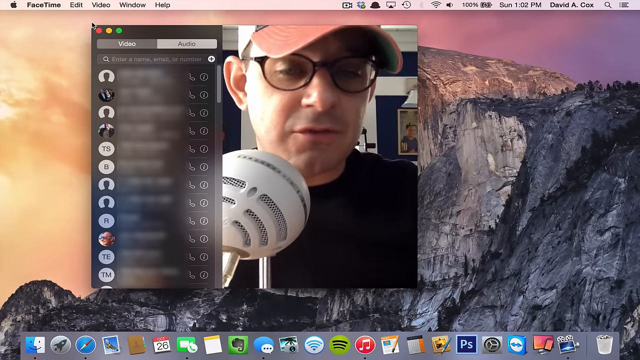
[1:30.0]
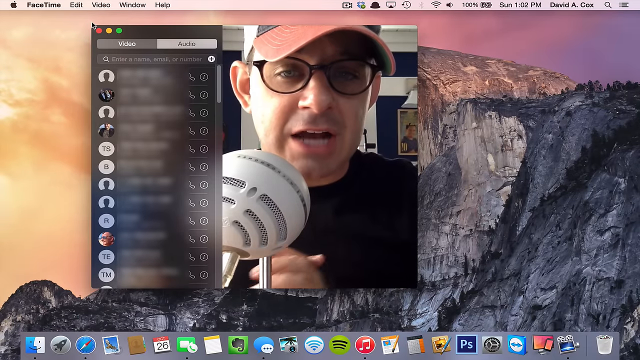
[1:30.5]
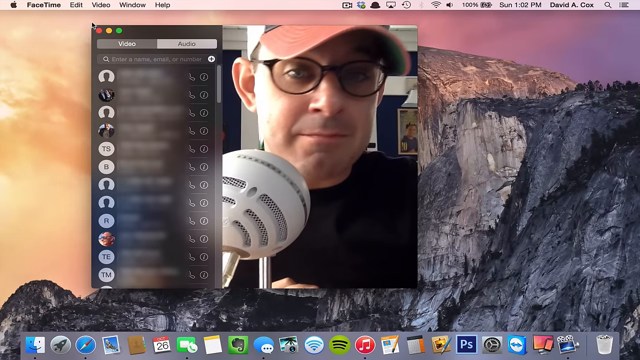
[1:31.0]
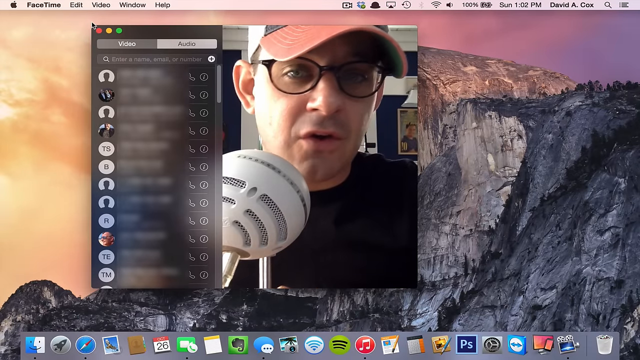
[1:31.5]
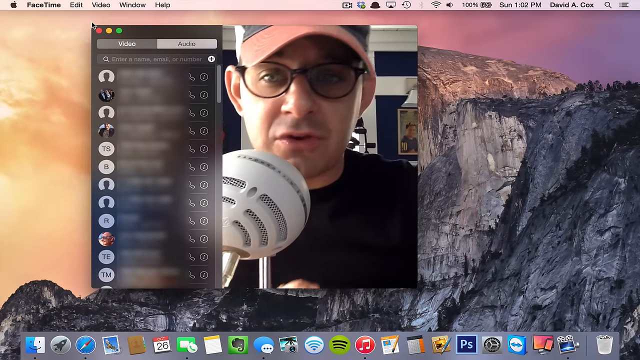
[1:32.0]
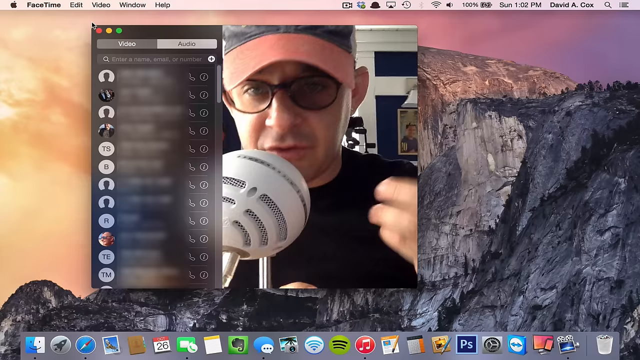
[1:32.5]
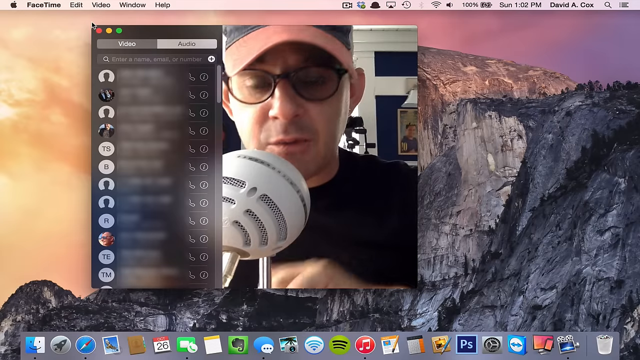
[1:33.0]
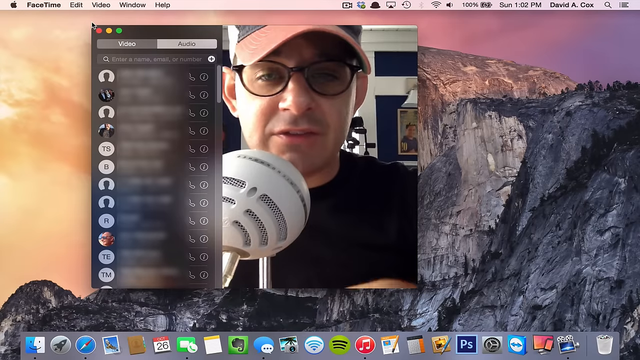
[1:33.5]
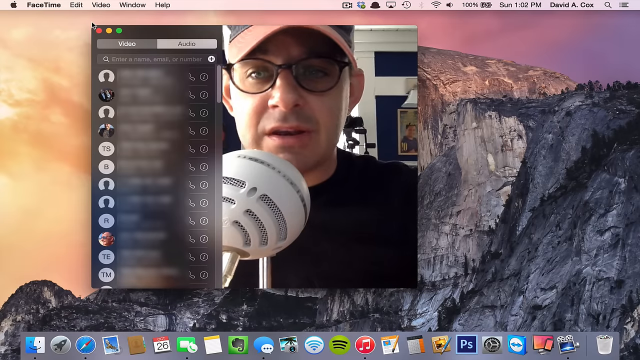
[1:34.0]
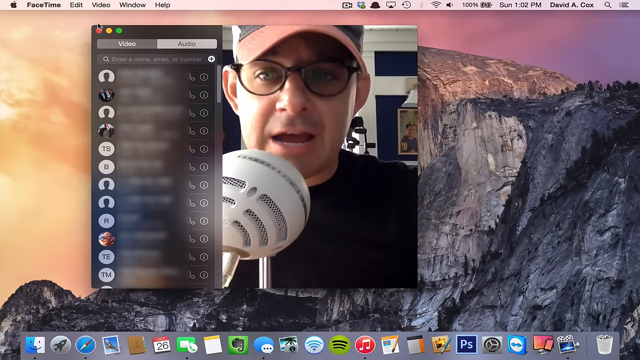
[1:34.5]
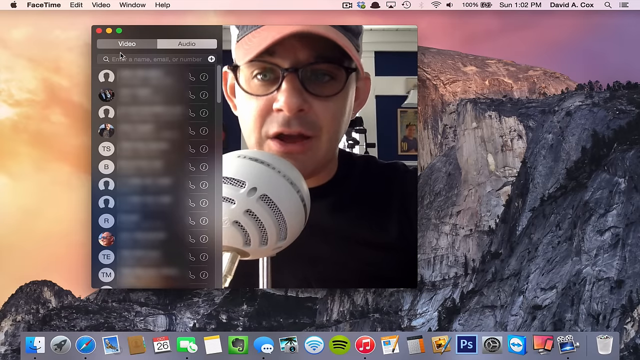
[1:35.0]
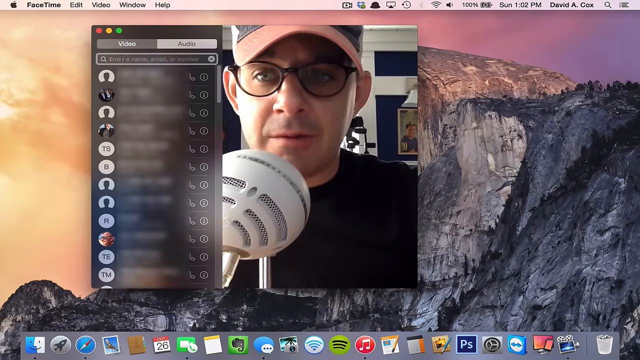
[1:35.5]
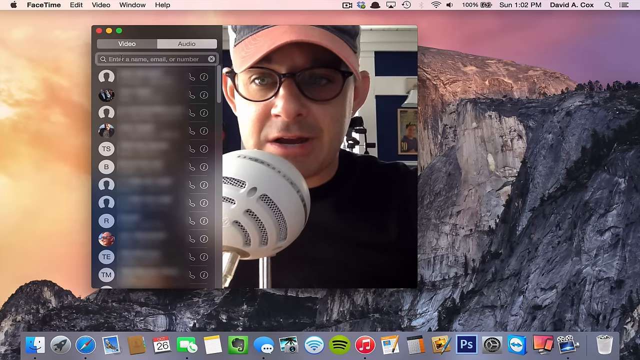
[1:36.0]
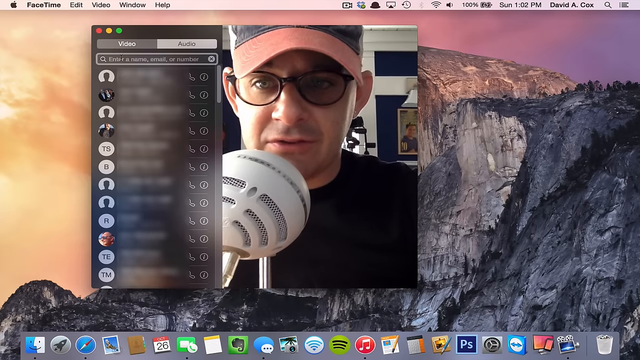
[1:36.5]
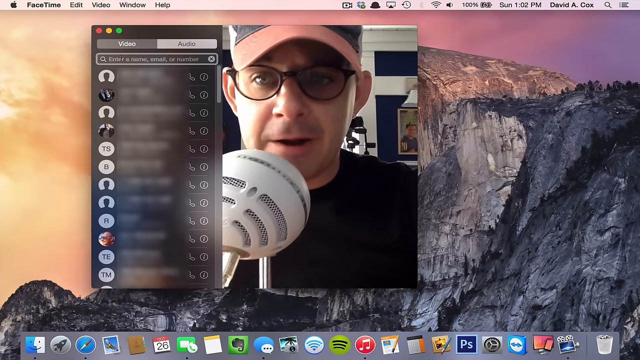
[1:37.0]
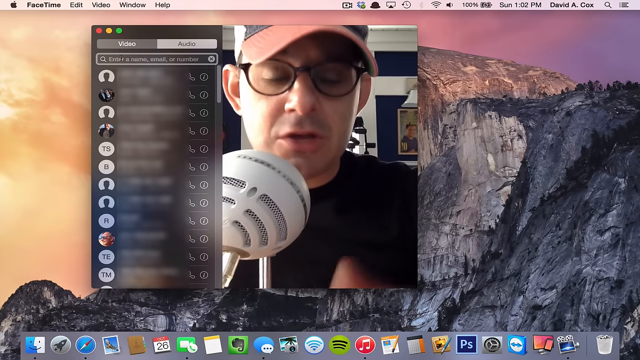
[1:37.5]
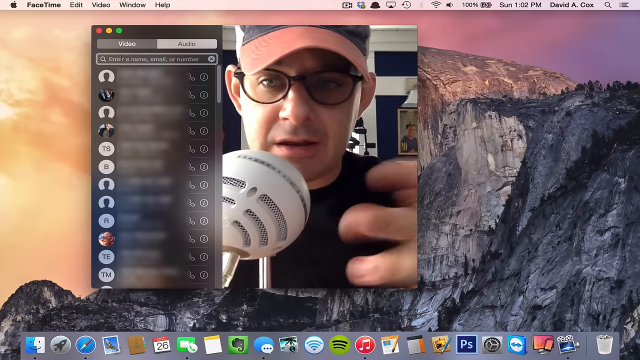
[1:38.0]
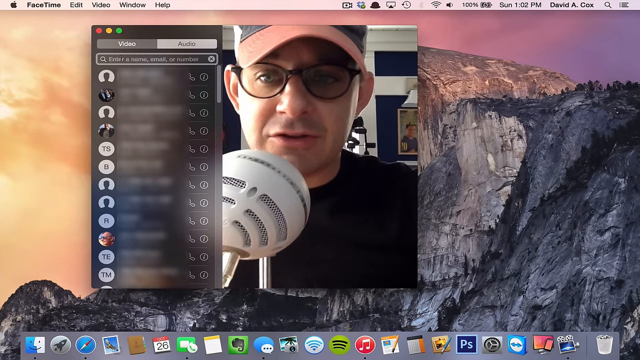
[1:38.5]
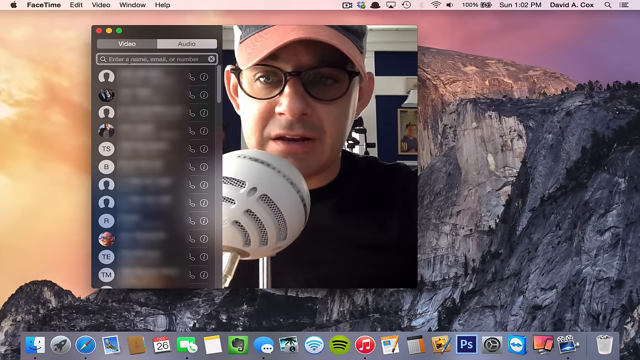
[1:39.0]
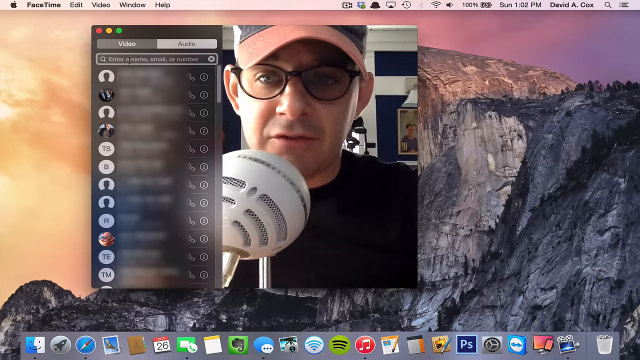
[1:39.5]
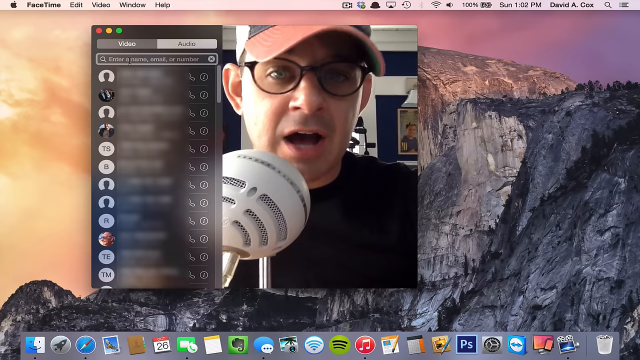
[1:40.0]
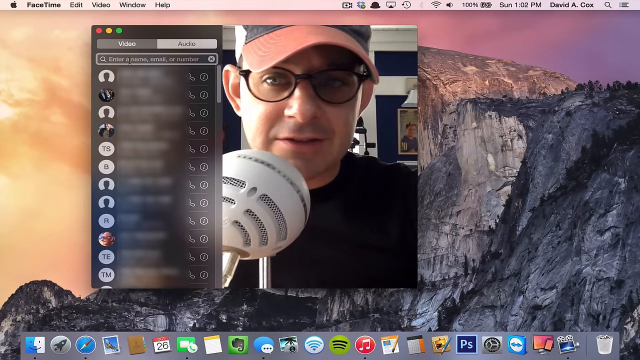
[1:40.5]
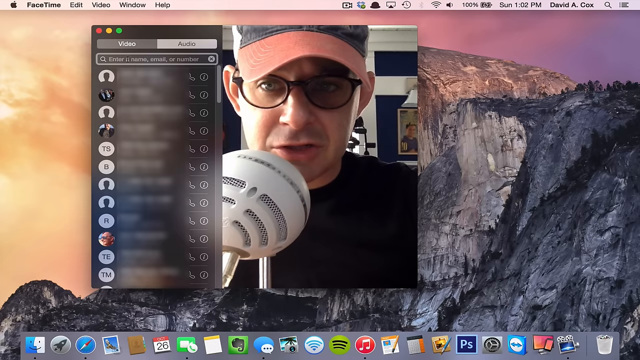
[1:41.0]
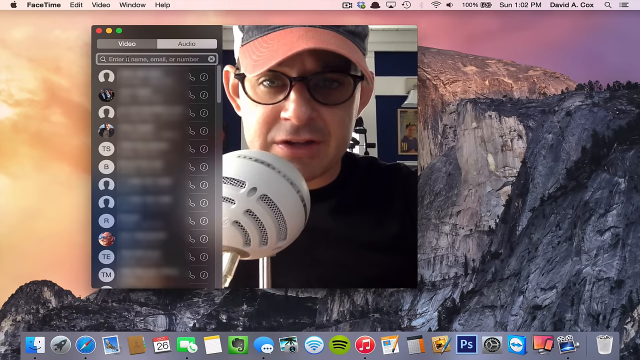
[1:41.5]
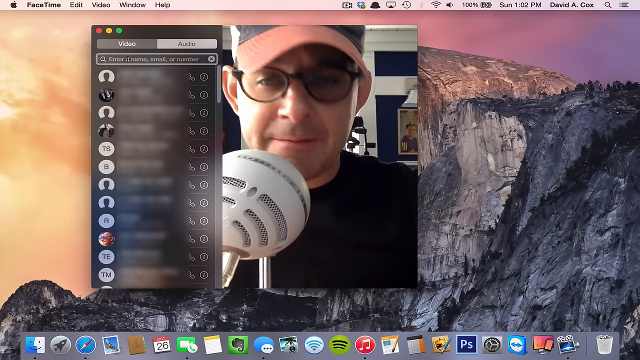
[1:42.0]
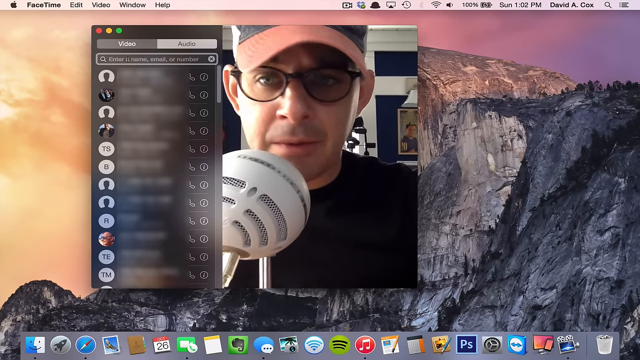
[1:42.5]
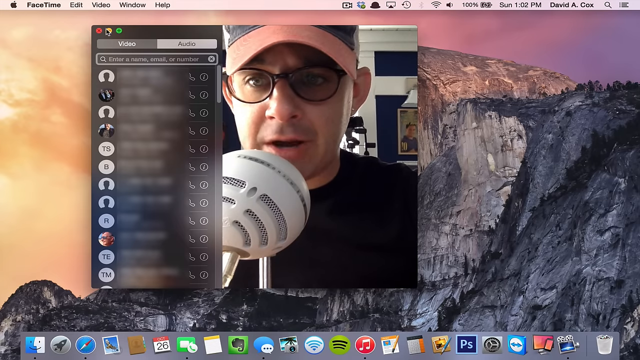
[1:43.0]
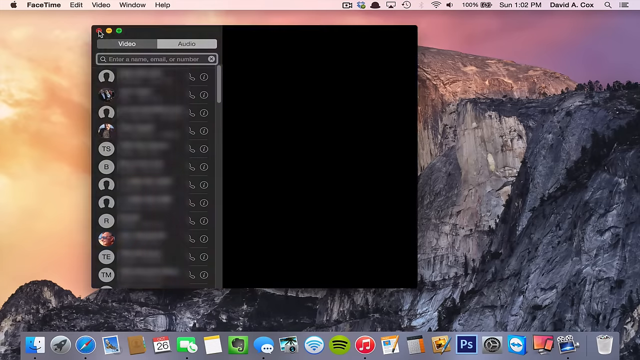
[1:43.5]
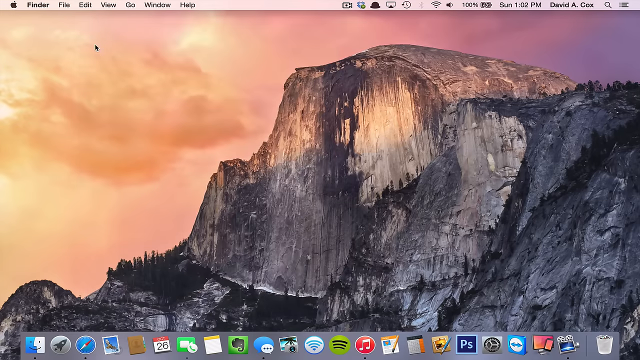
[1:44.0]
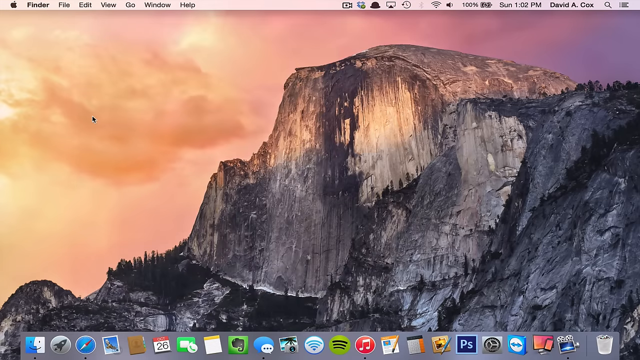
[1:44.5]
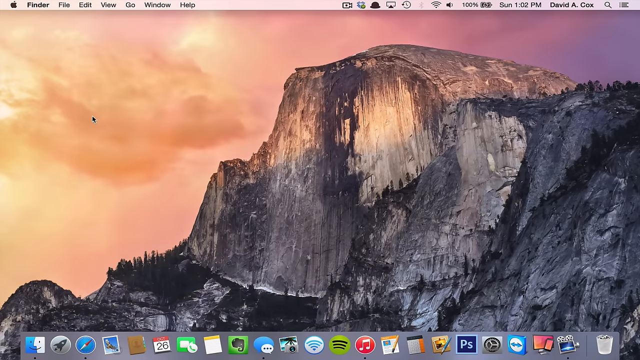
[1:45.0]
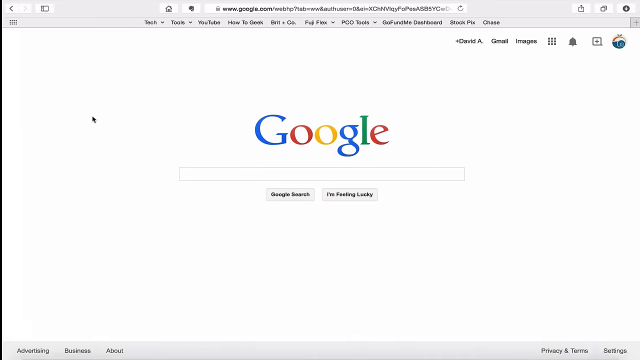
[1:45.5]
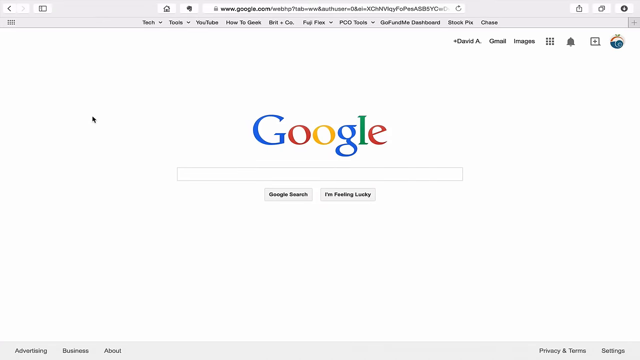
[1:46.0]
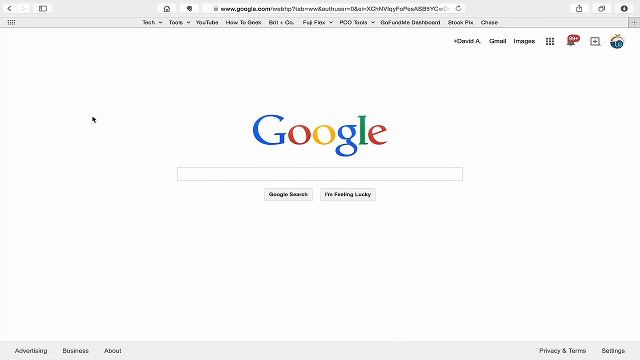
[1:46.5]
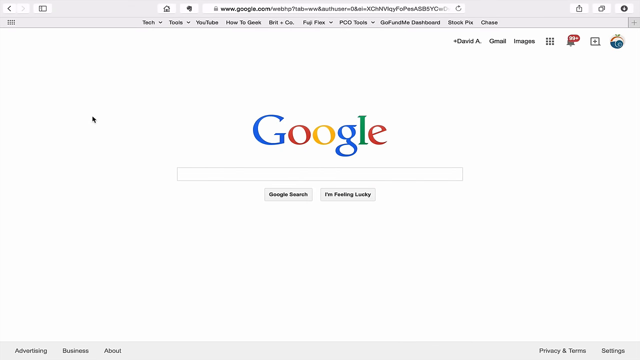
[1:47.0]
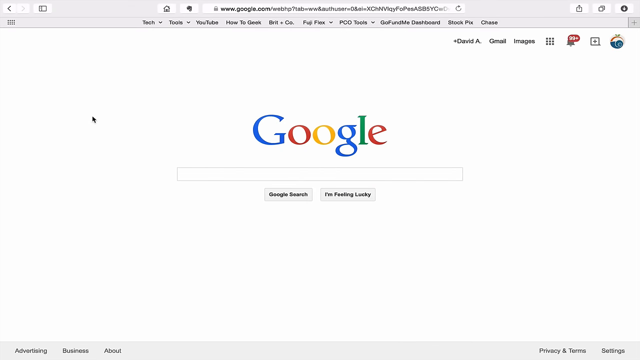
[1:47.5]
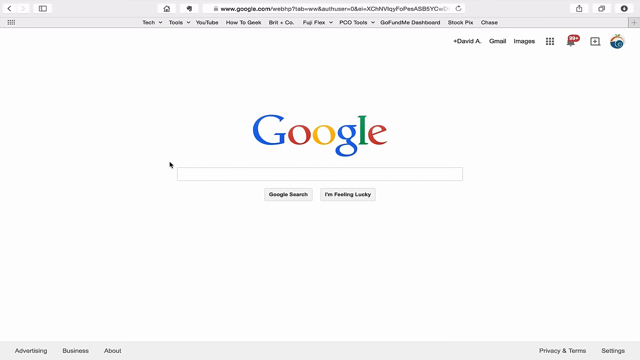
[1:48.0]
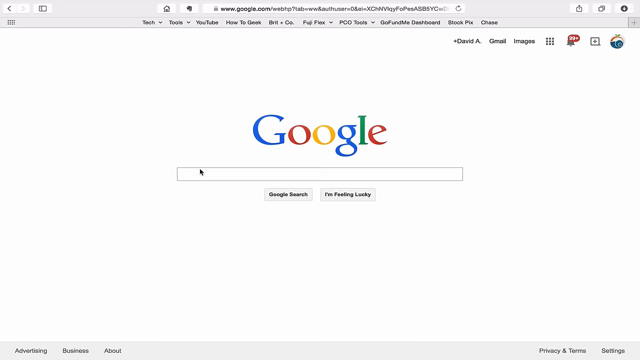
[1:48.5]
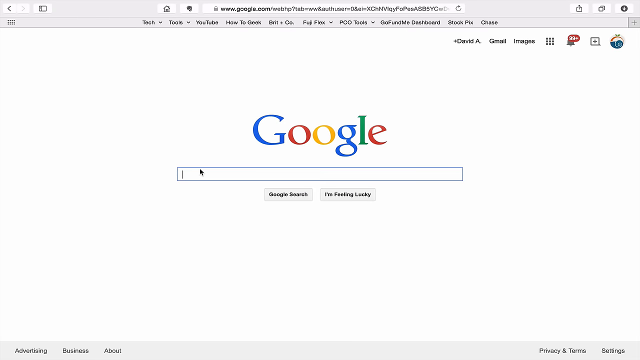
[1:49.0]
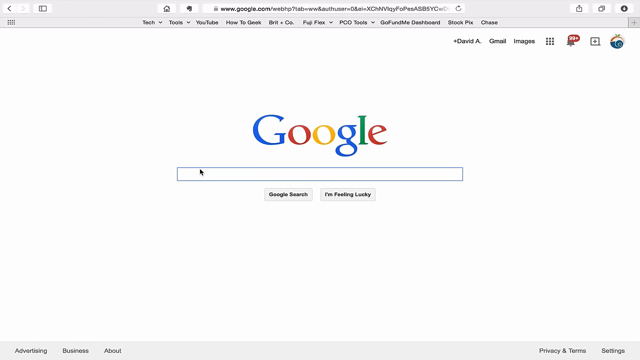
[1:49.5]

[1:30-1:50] The man is still in the box in front of the mountain, using his mouse, apparently to instruct someone; he seems to be talking into the microphone about how to add contacts. The screen next to him shows video and audio, then reads "enter a name, email, a number", with pictures of people, their initials and silhouettes. He appears to be showing how to connect an iPhone on the computer, possibly over FaceTime. He looks really intense. A Google search page flips on and takes over the whole screen, then the view flips back to the man.